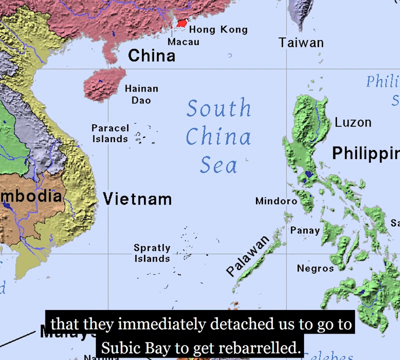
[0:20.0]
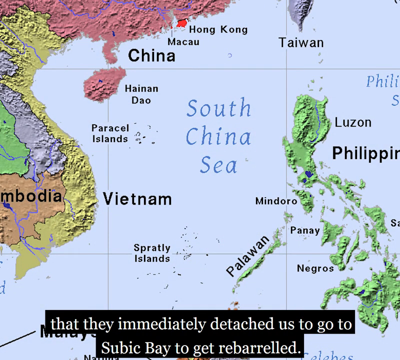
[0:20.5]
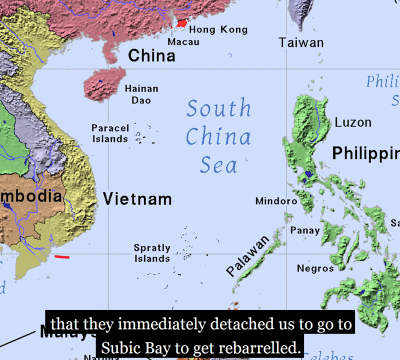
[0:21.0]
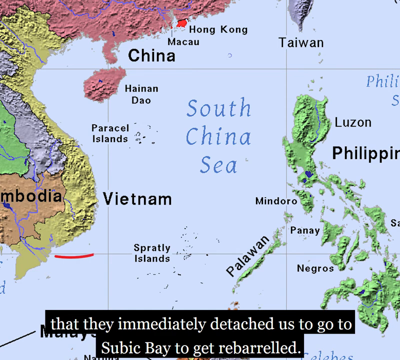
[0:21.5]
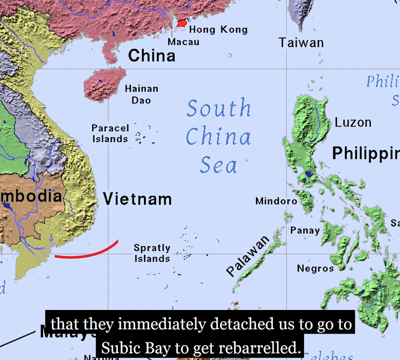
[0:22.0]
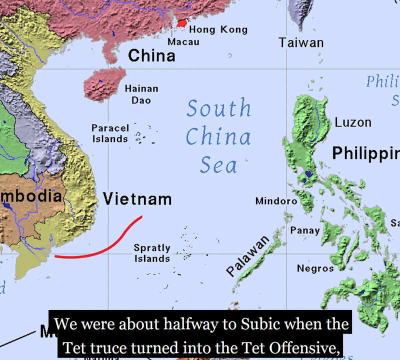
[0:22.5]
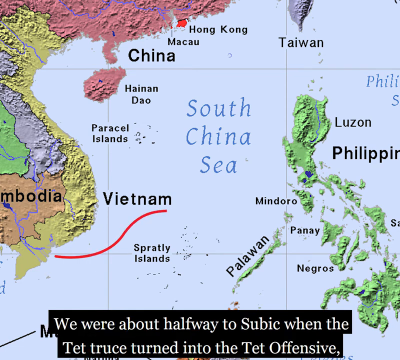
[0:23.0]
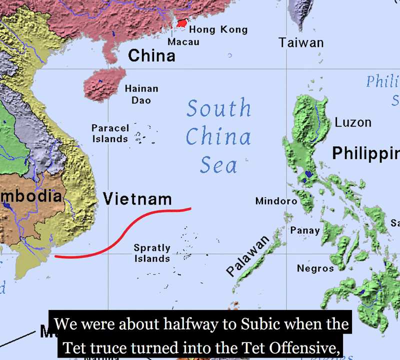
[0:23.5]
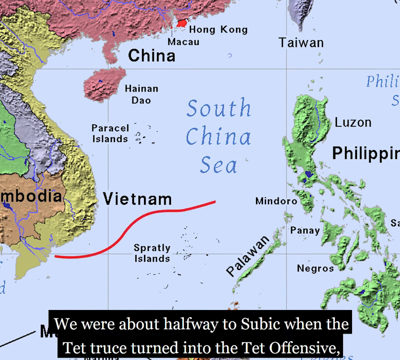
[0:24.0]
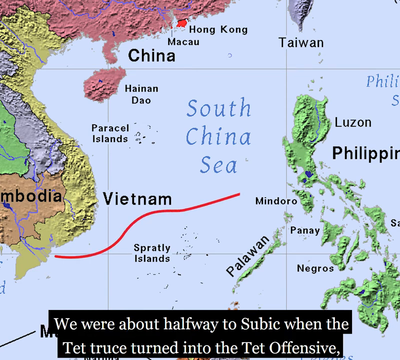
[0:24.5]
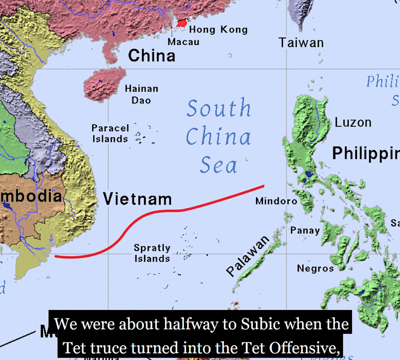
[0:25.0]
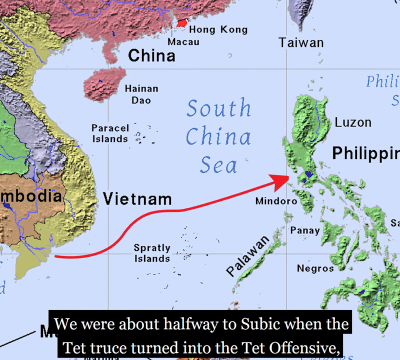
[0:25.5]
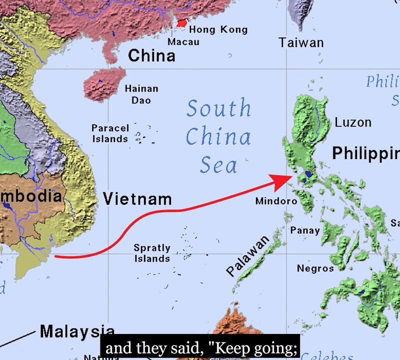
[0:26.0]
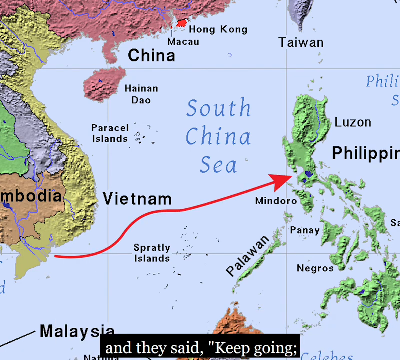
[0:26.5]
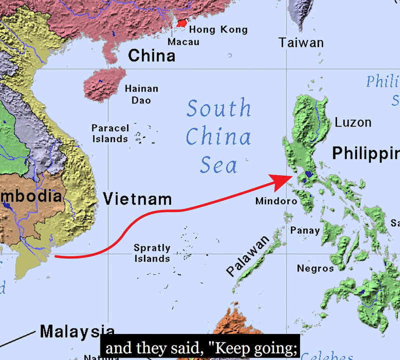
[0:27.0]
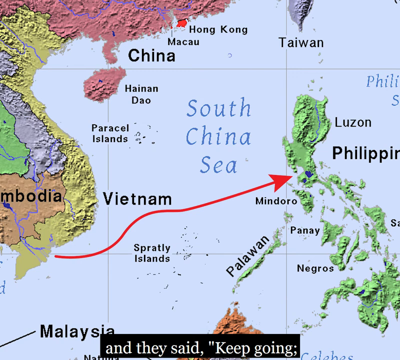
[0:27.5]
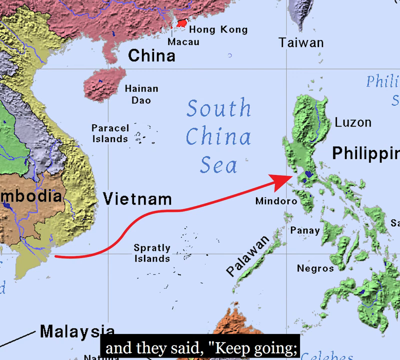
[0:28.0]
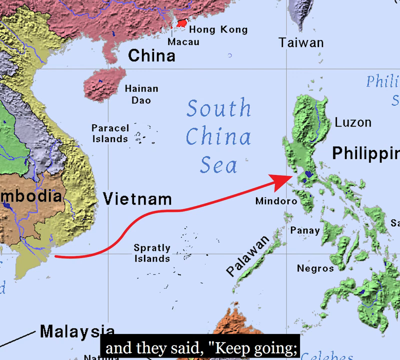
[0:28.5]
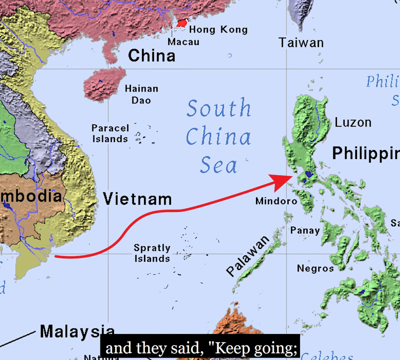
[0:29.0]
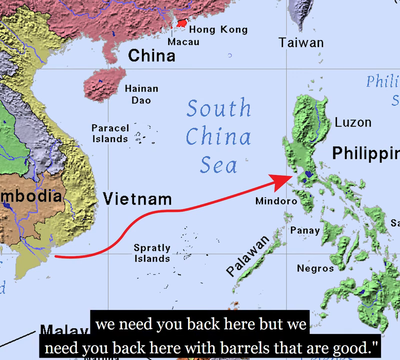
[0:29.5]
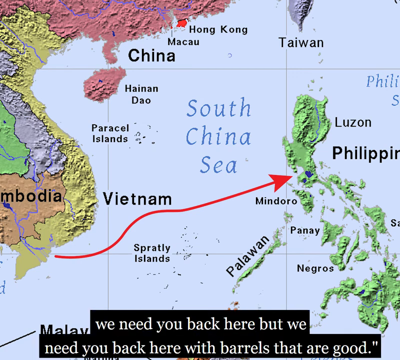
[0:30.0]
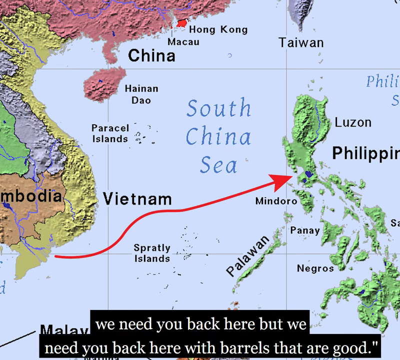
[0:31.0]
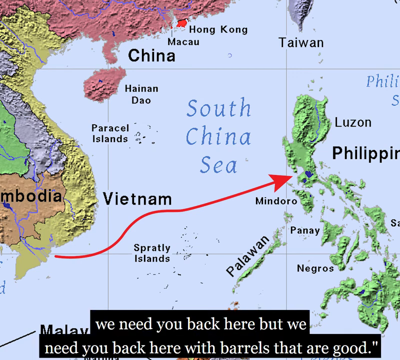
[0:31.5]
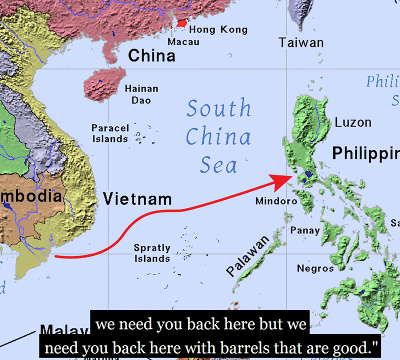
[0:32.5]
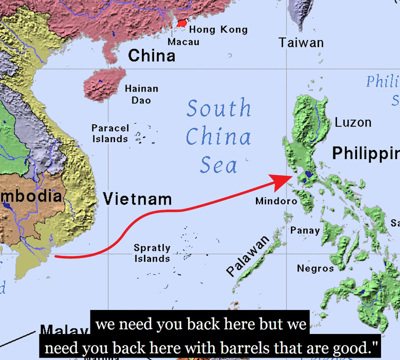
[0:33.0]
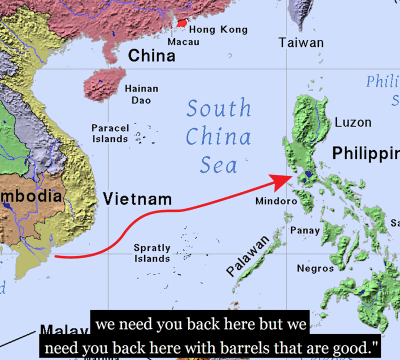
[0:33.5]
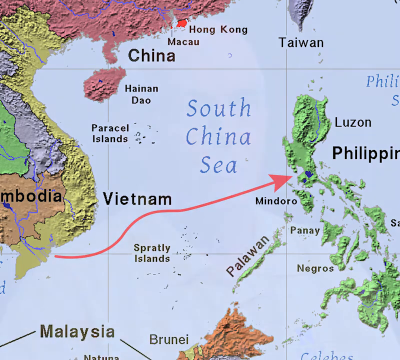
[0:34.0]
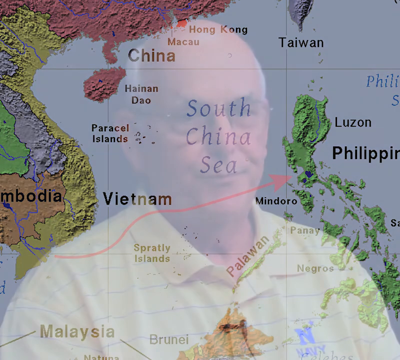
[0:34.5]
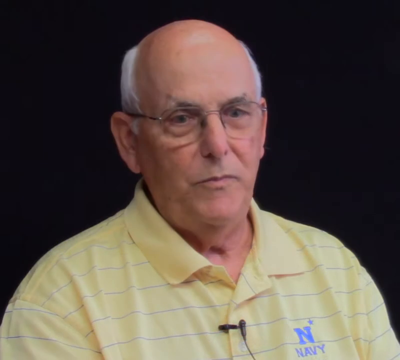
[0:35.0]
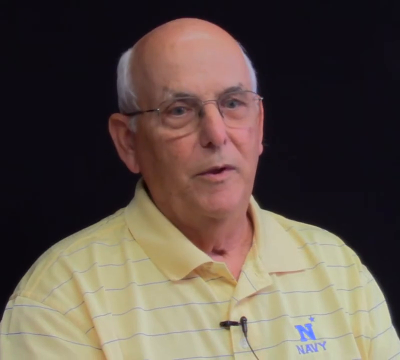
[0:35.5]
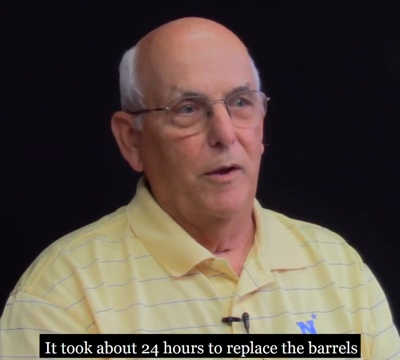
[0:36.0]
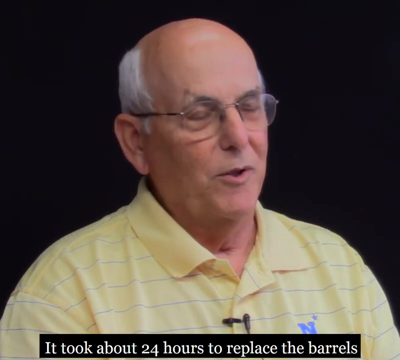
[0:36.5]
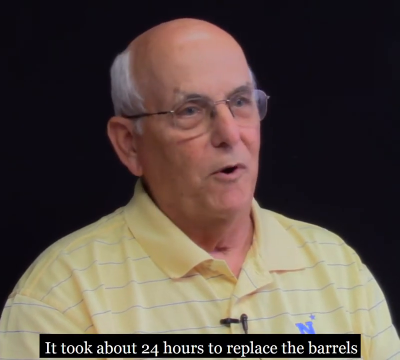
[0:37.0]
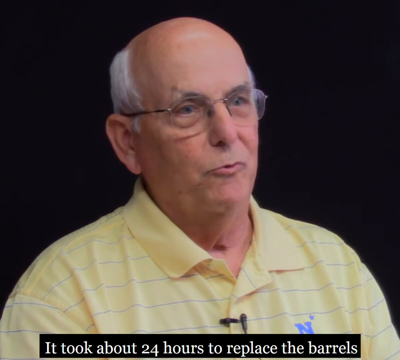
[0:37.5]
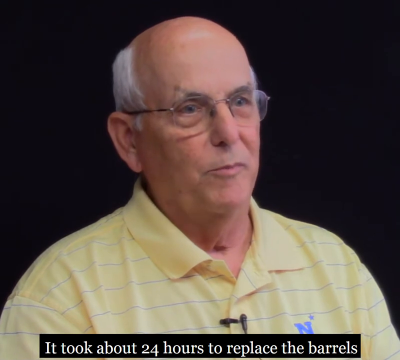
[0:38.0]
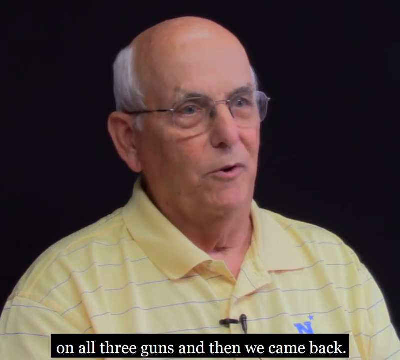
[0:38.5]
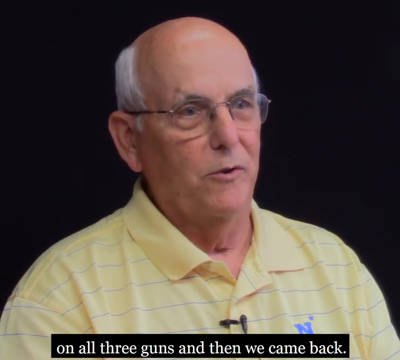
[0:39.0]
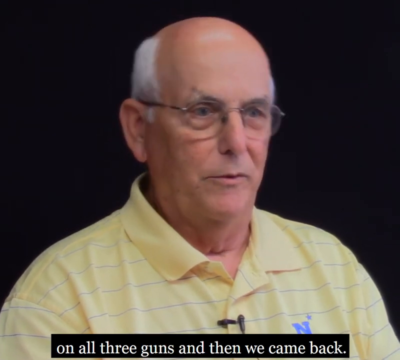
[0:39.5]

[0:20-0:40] A map of the South China Sea is shown, with the sea's name in blue lettering. At the top left is China, with Hong Kong and Macau and a brownish island; Taiwan is at the top right in gray; Cambodia and Vietnam are in yellow and orange; and on the right side are the Philippines with some smaller islands. White lettering on a black background at the bottom reads "that they immediately detached us to go to, we were about halfway to Subic when the", and then stops. A red arrow goes from what appears to be the bottom end of Cambodia toward the Philippines. White lettering below then reads "we need you back here, but we need you back here". The image returns to the older white man in the yellow and blue lined collared shirt, with a black microphone clipped to his front. He has black-rimmed glasses and white hair on the left and right sides, balding over the top. The lettering below him is partly cut off, so not all of it can be seen.